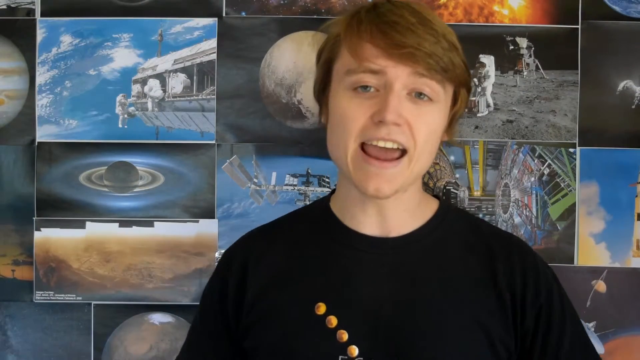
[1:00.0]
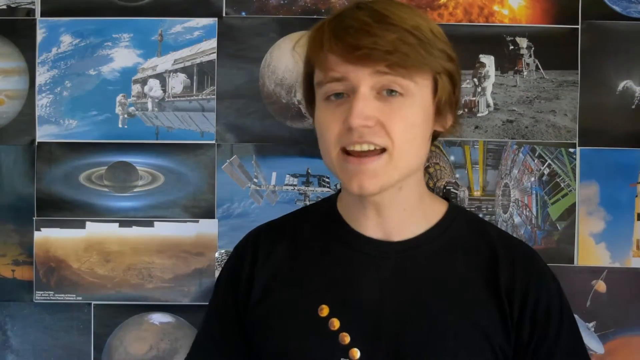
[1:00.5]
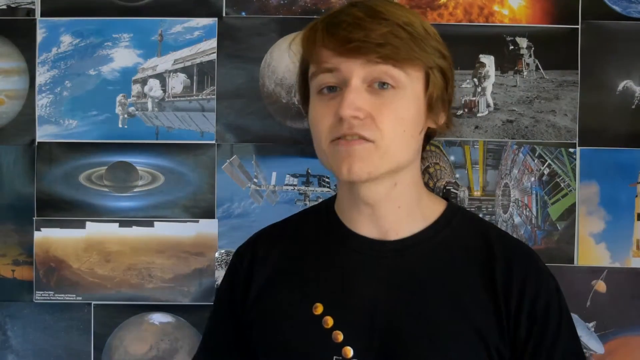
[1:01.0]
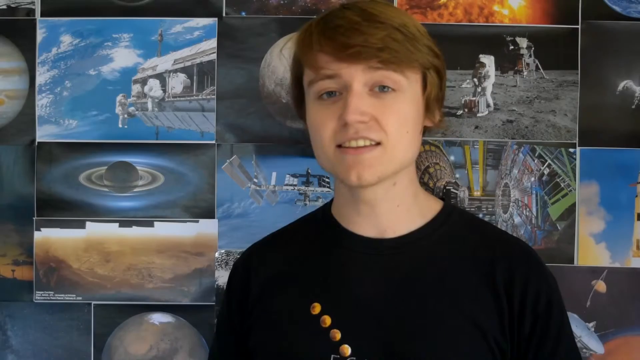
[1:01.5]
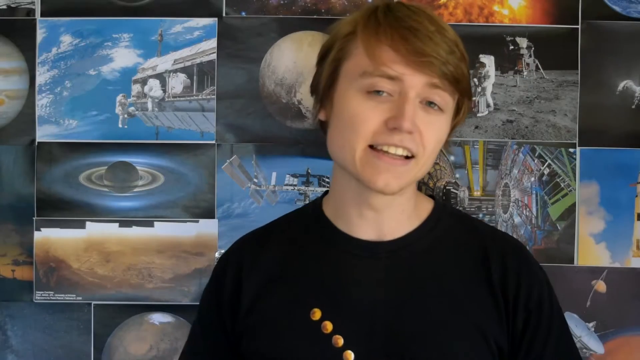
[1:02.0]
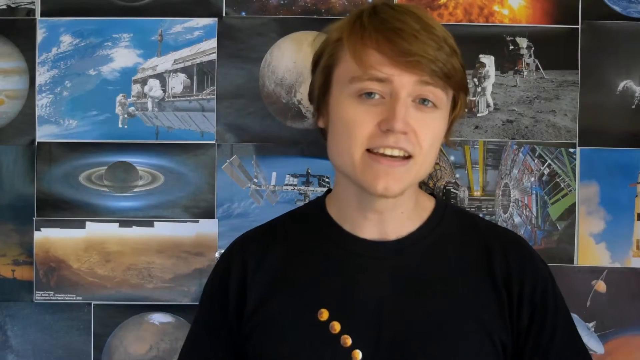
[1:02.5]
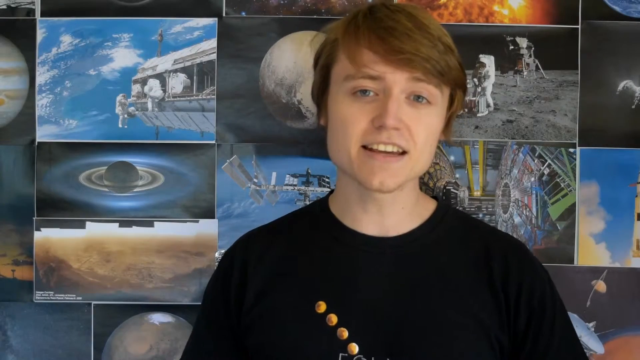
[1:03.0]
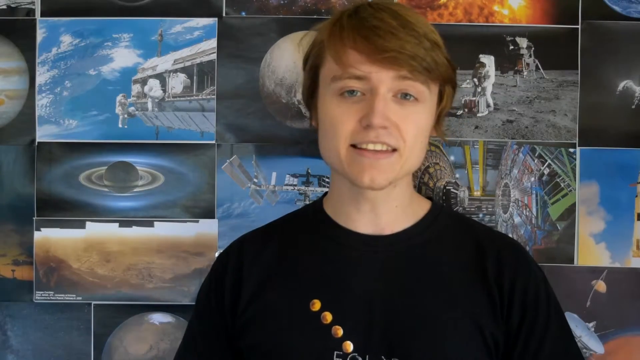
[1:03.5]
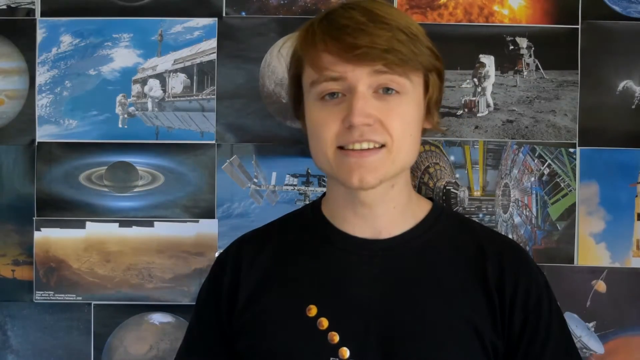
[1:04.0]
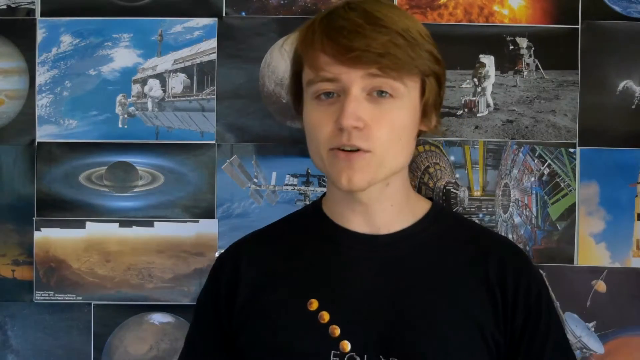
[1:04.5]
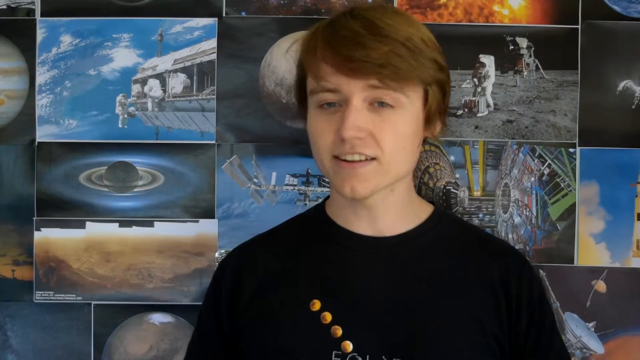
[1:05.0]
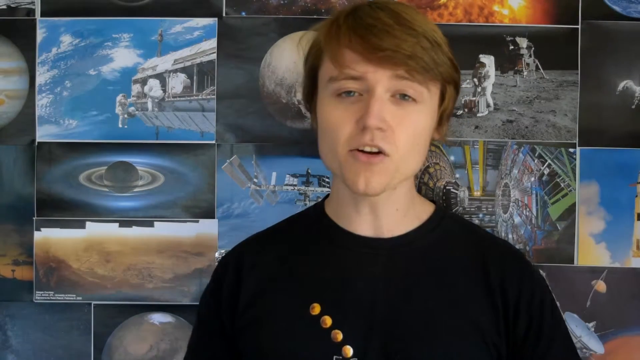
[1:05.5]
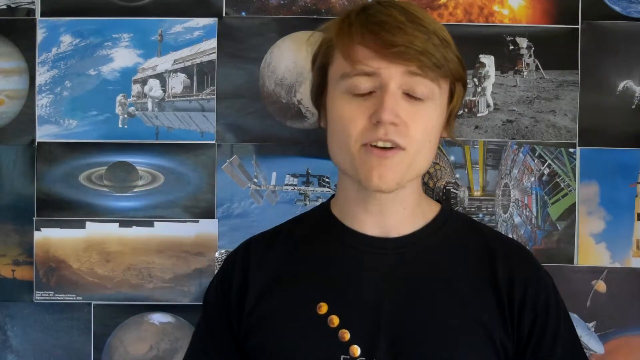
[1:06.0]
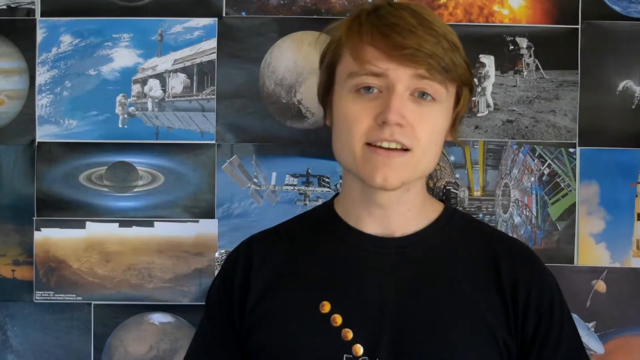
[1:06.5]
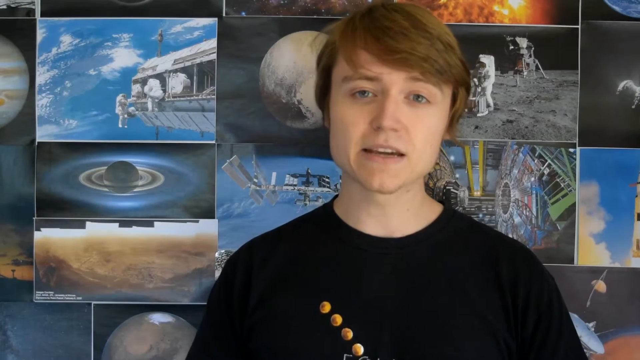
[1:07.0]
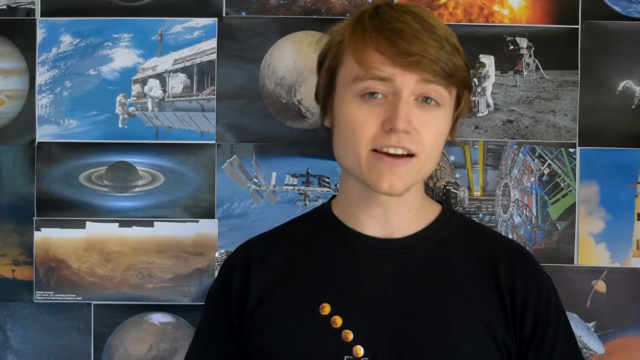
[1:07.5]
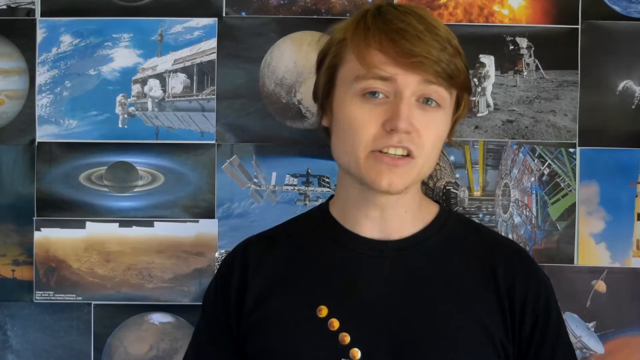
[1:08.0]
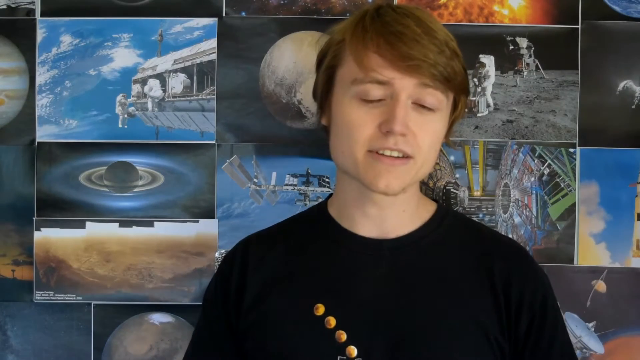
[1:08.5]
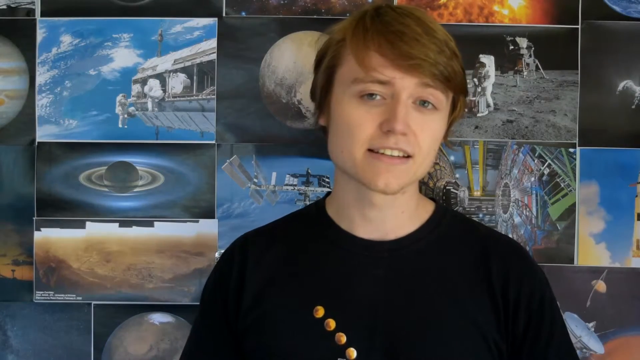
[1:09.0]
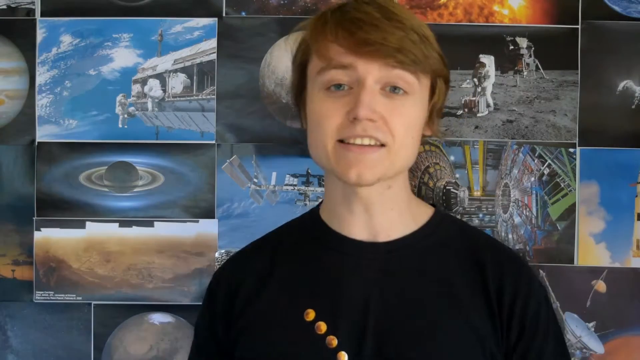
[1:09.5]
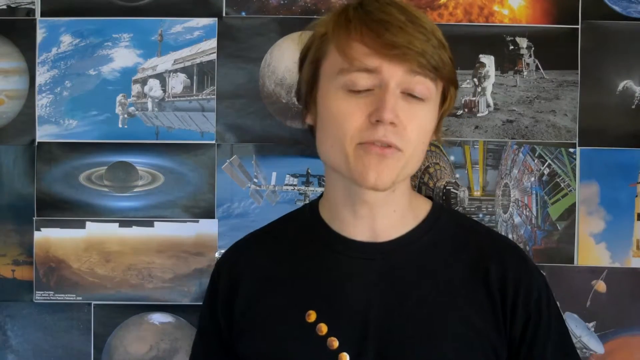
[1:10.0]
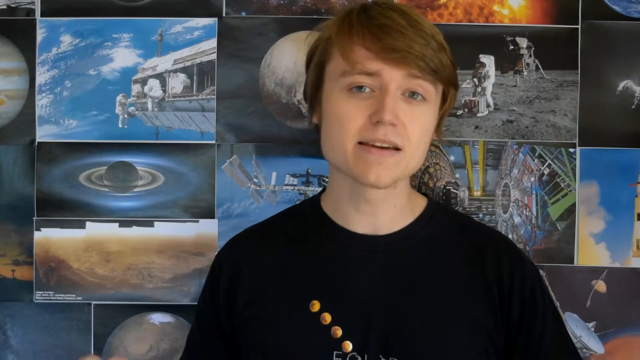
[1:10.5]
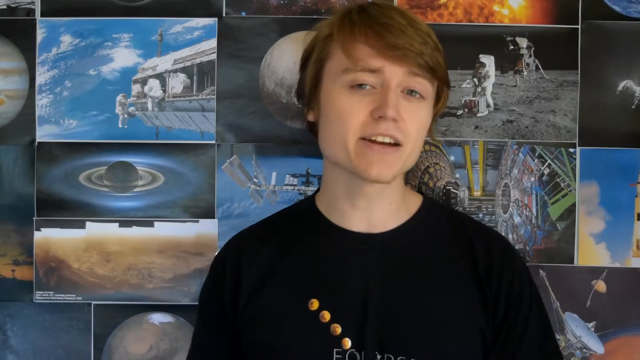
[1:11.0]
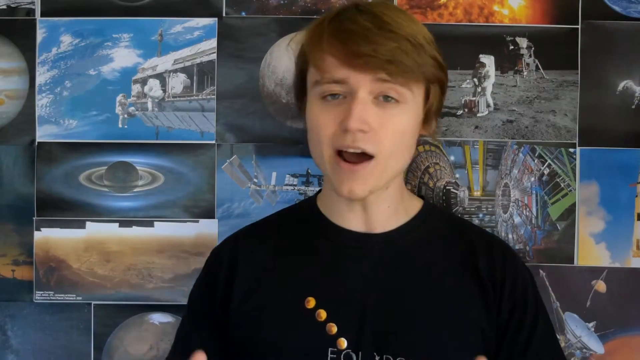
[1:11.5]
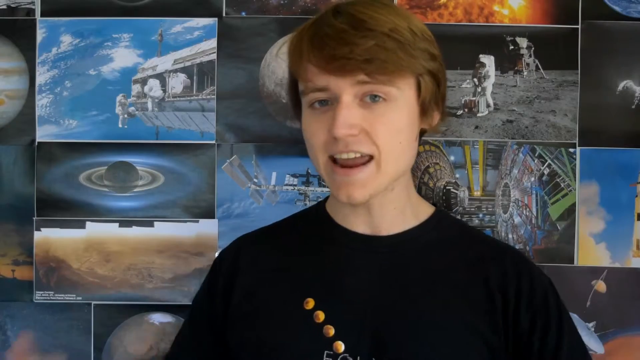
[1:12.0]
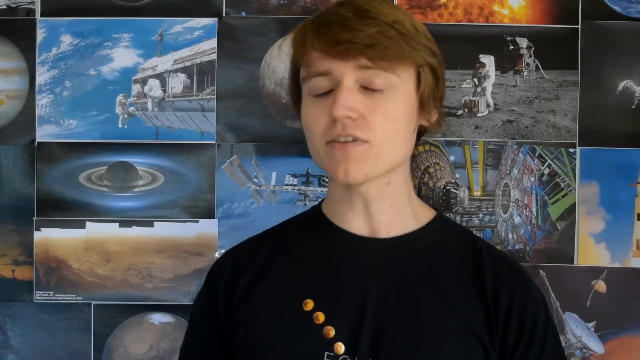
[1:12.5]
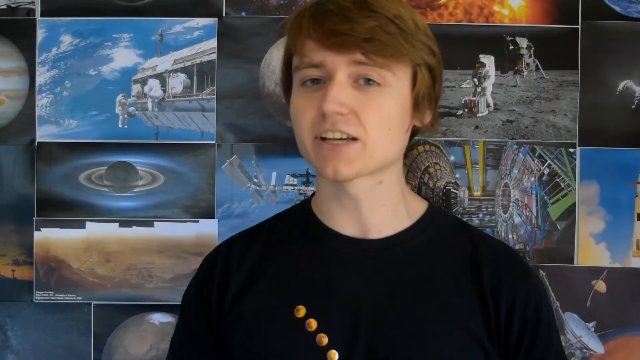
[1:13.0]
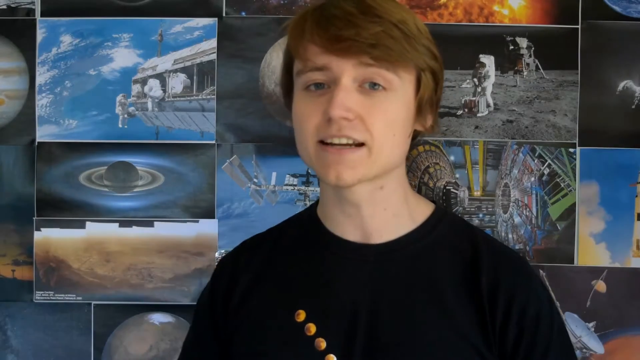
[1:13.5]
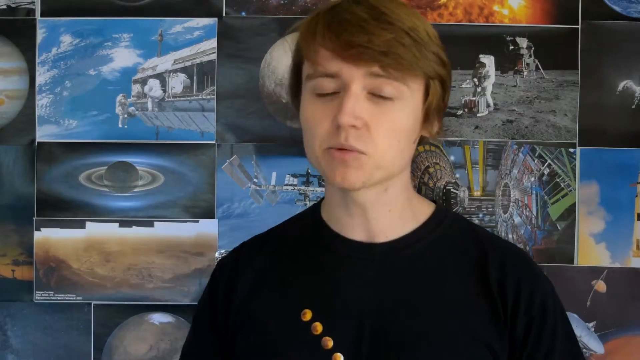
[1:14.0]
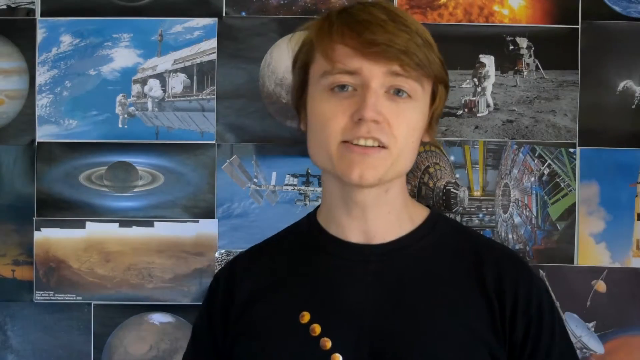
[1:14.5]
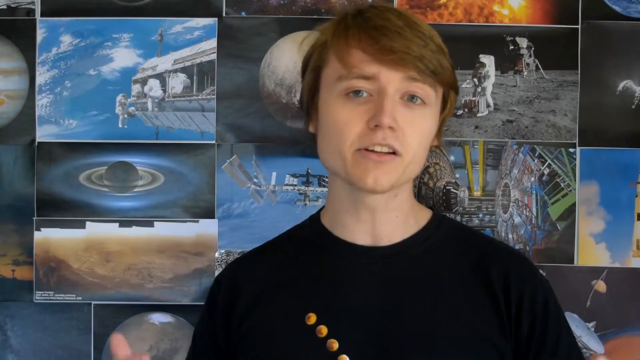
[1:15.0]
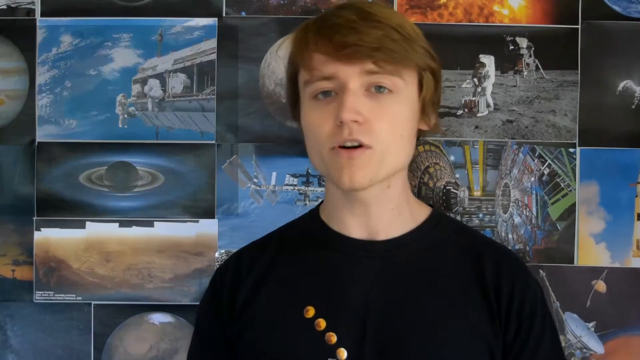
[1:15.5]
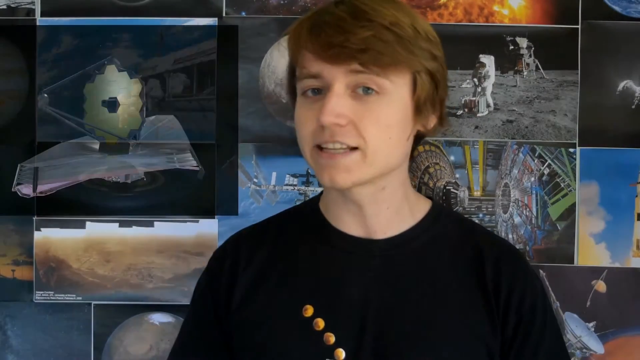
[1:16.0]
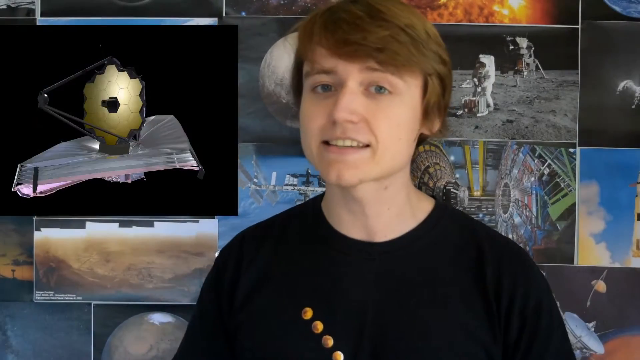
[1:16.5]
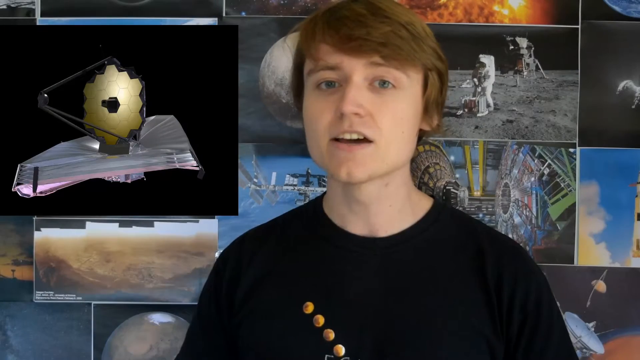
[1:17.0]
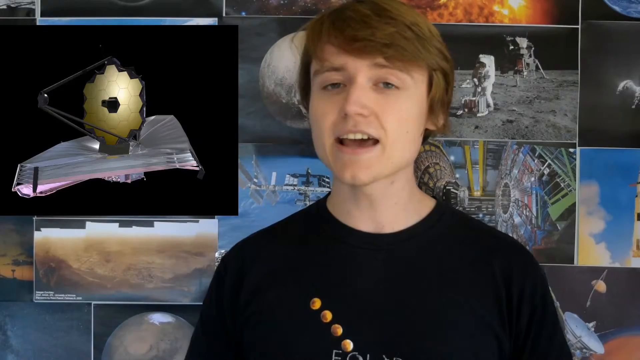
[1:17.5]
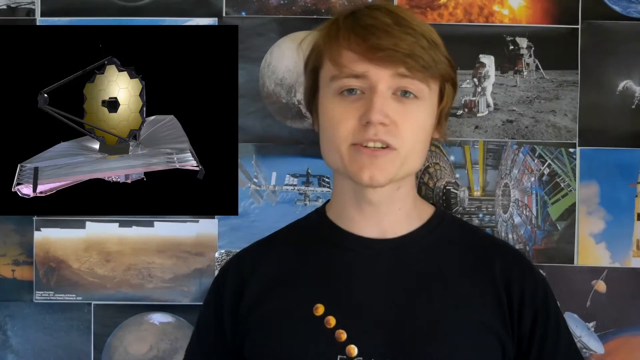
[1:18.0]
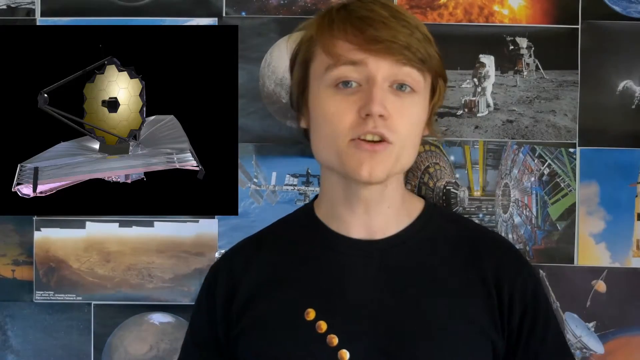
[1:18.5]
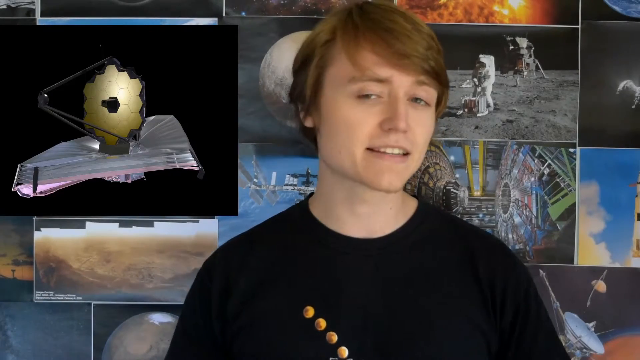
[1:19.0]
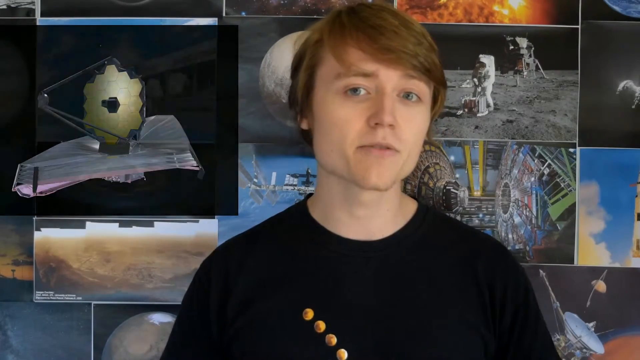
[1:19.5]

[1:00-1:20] The same boy stands and talks. There are a telescope, interstellar space stations, pictures of the world, pictures of Mars and other planets, and many other things related to space.